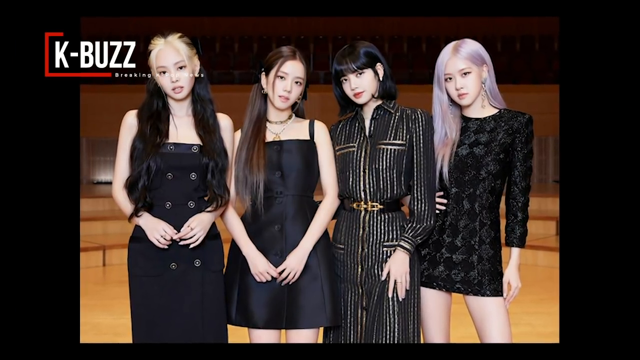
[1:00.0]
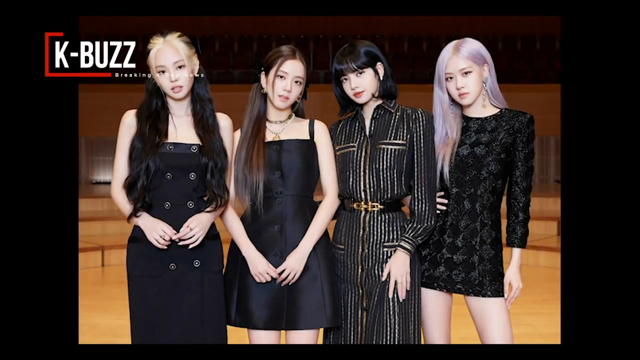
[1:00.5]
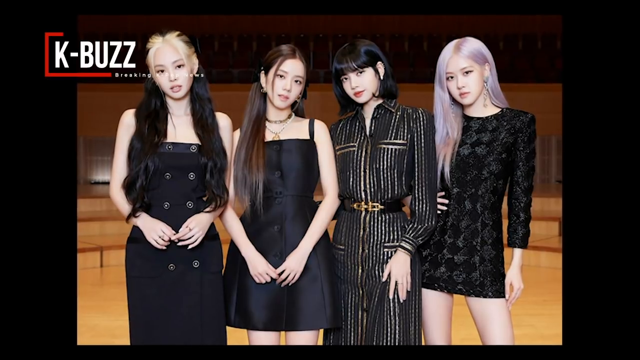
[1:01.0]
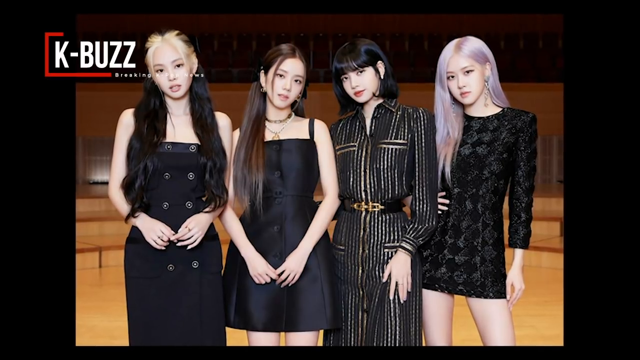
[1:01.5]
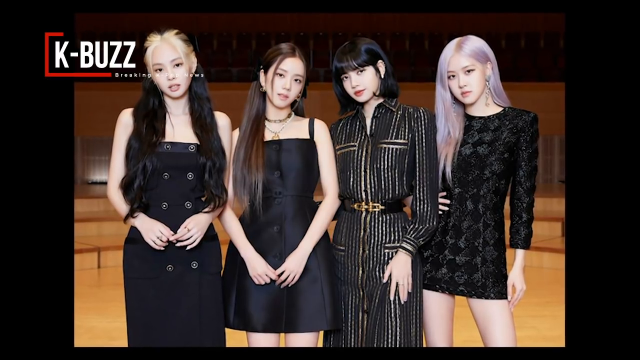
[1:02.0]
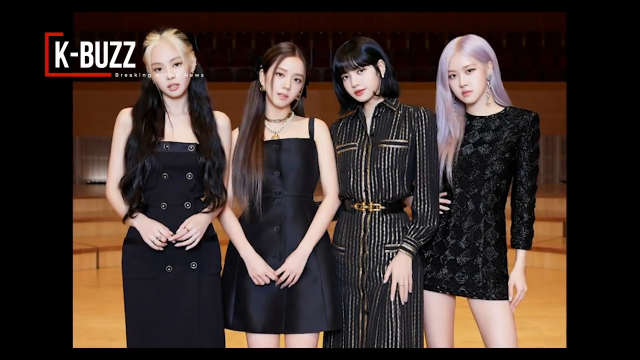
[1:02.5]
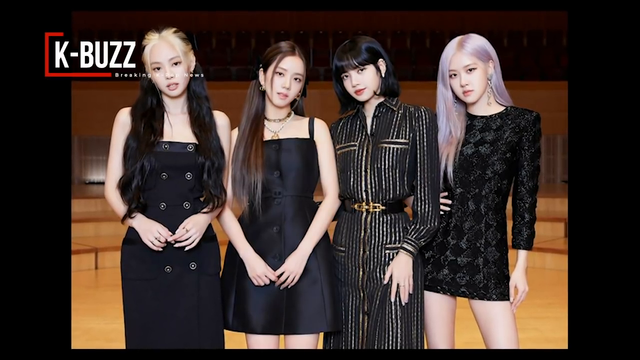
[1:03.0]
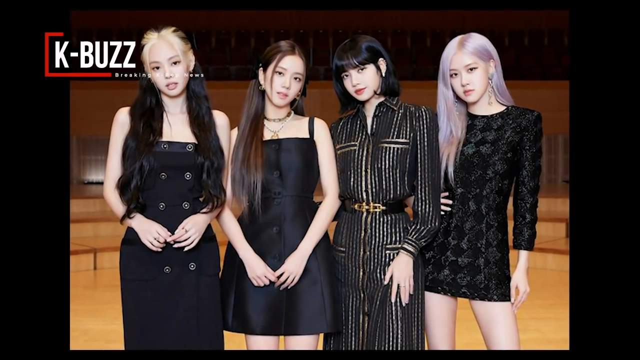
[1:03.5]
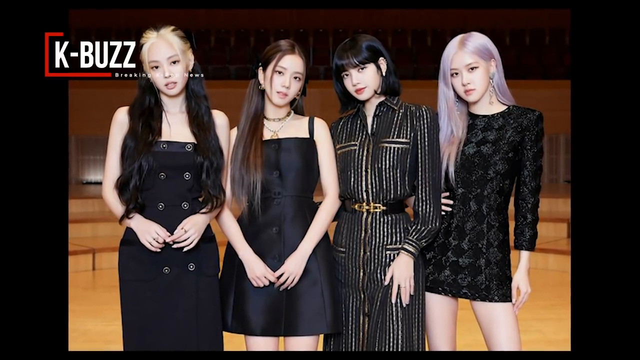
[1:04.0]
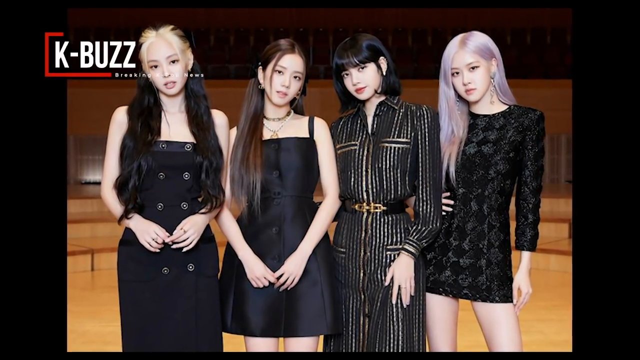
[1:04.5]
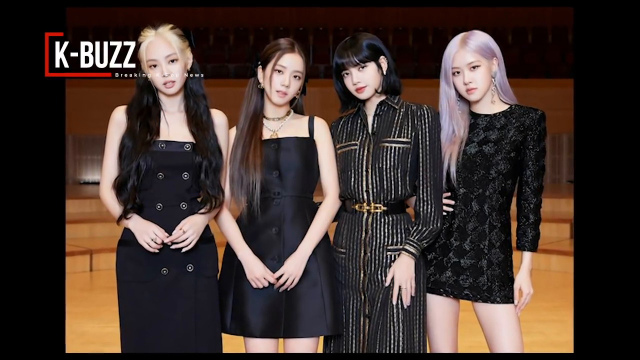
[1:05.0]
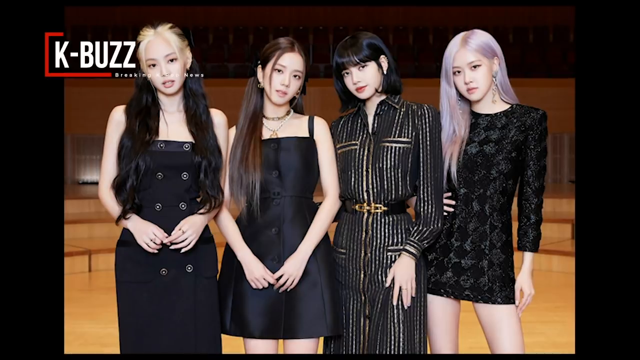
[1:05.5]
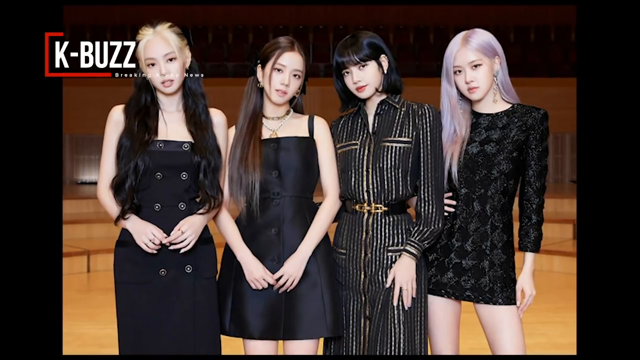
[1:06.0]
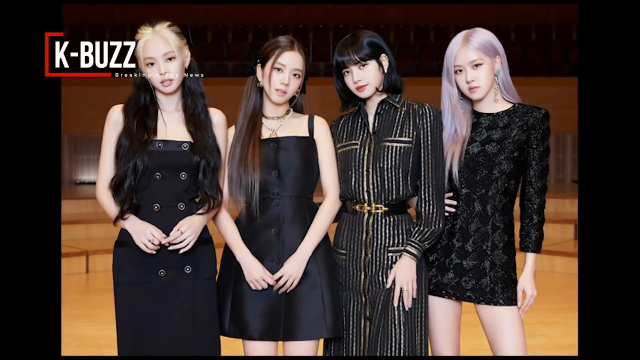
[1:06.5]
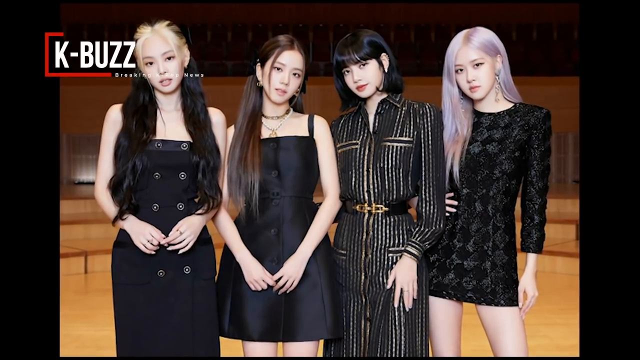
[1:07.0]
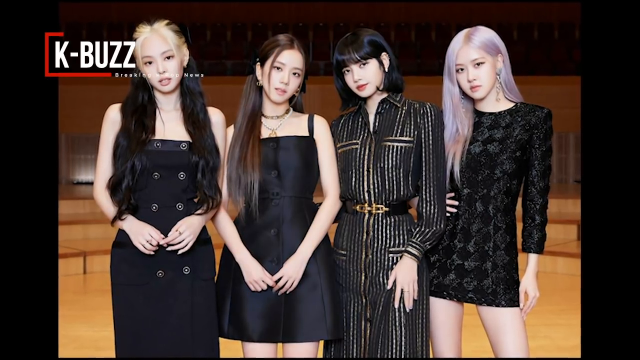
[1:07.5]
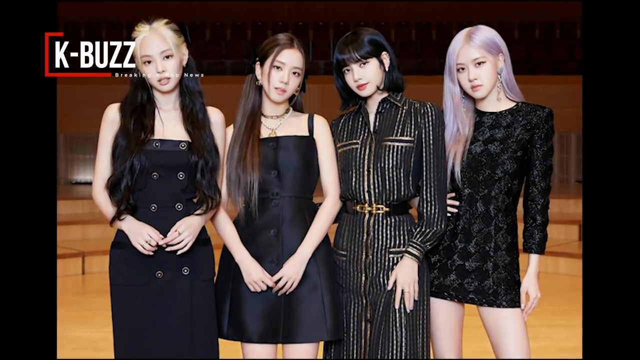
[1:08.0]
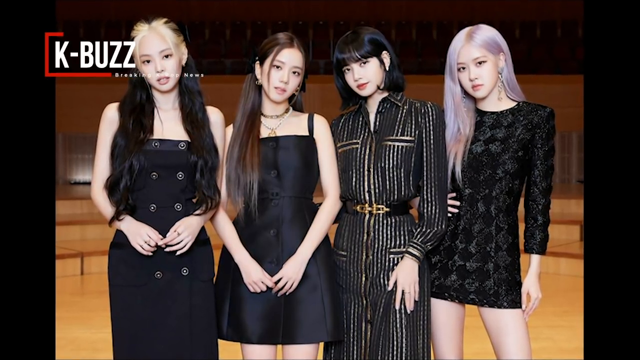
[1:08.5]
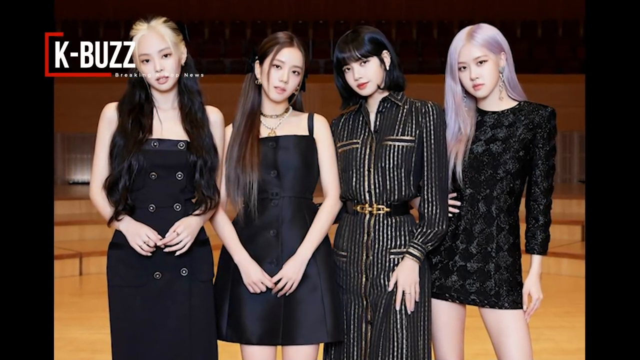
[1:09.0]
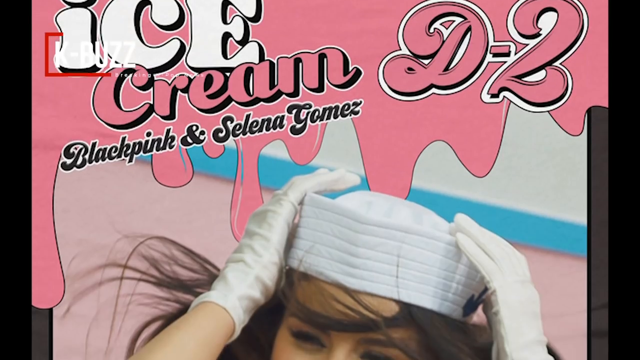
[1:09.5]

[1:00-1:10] The video continues to zoom in on the image, which does not fully fill the screen because its aspect ratio is not stretched out. The video then cuts to one of the photos from earlier with the text "ice cream", "D2", "Blackpink" and "Selena Gomez", and kind of zooms out. The top of someone's head is visible, and the person wears white gloves on both hands; the gloves and outfit are seemingly meant to make them look like they work on an ice cream truck. Their hair shows at the bottom left-hand side of the screen.